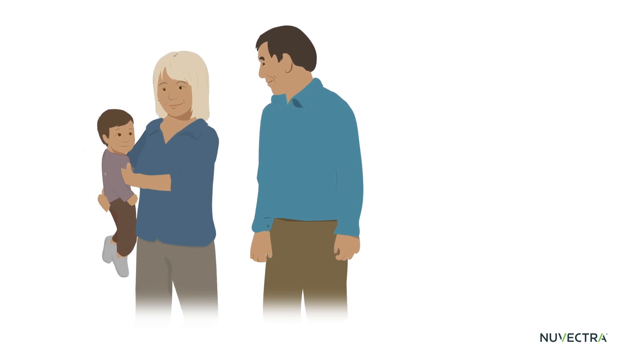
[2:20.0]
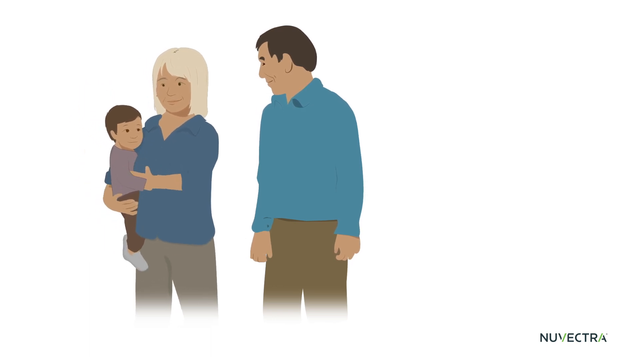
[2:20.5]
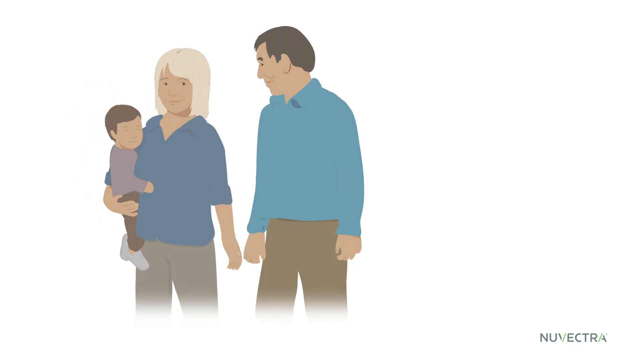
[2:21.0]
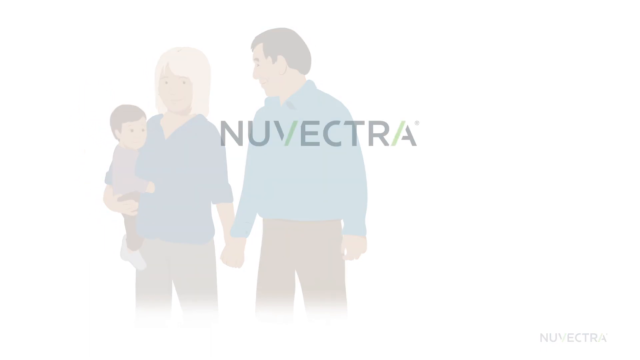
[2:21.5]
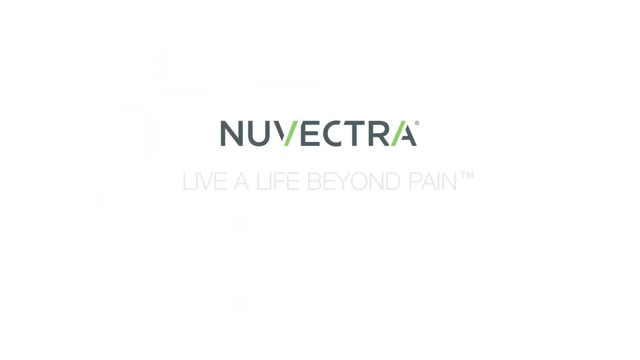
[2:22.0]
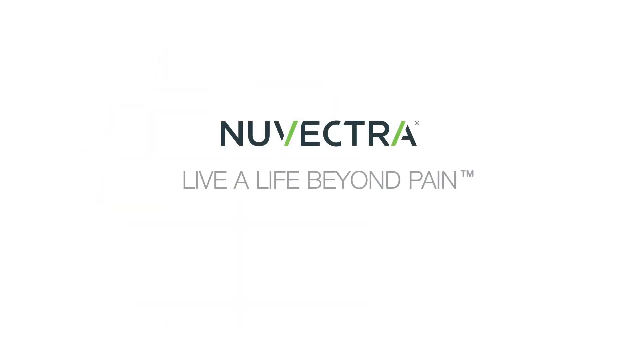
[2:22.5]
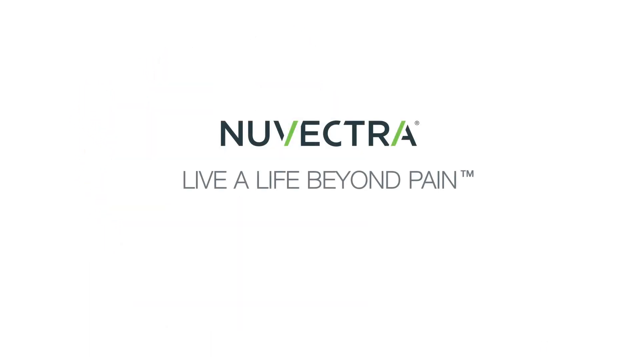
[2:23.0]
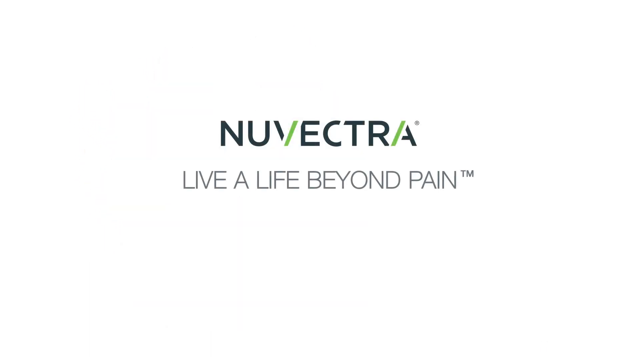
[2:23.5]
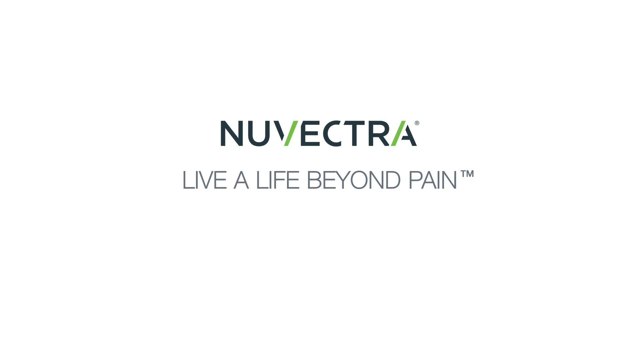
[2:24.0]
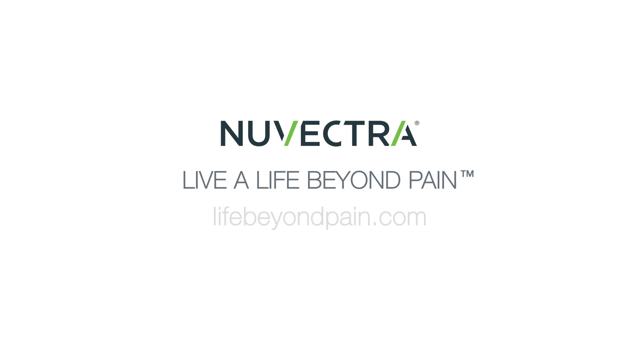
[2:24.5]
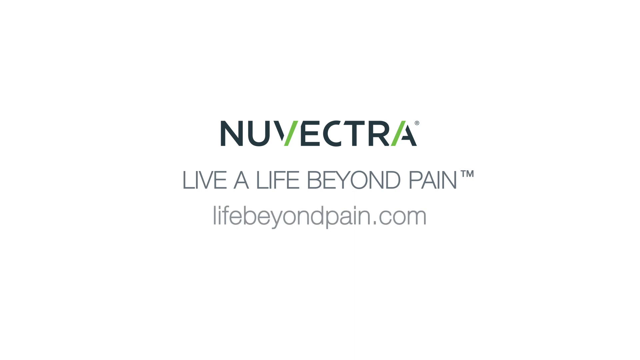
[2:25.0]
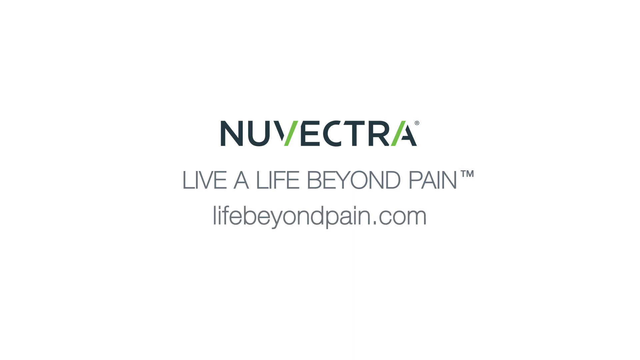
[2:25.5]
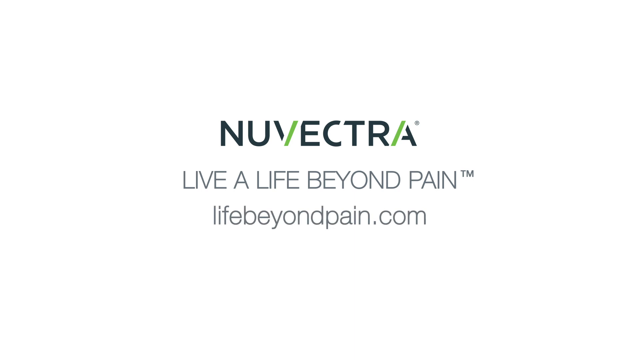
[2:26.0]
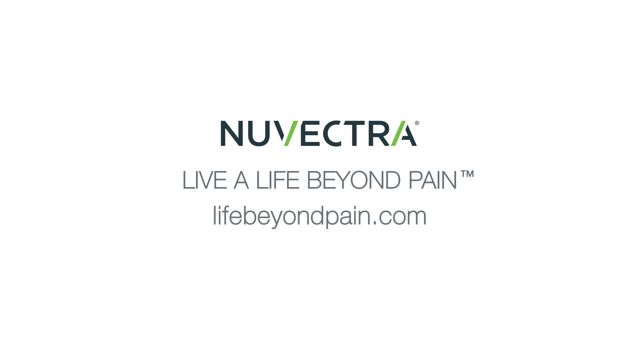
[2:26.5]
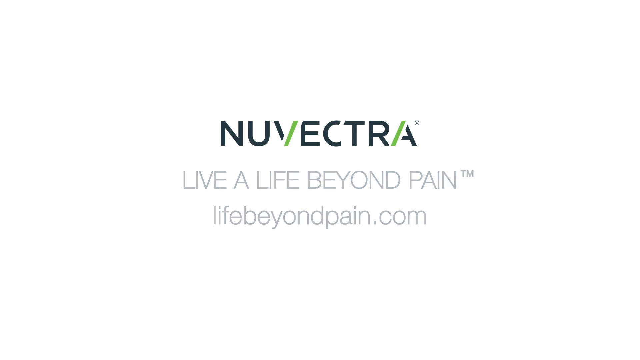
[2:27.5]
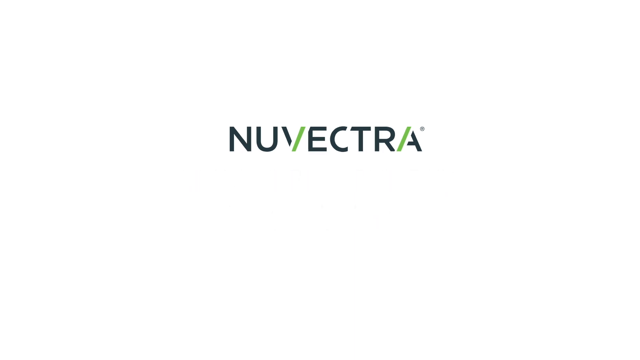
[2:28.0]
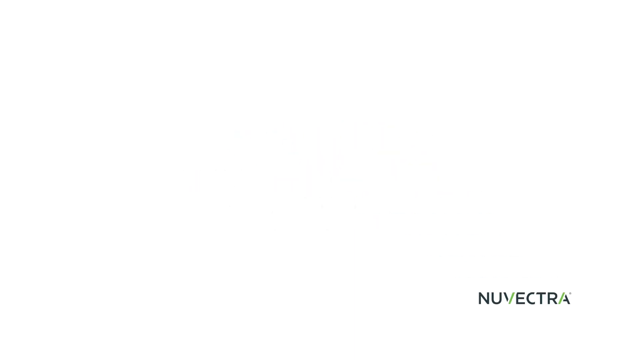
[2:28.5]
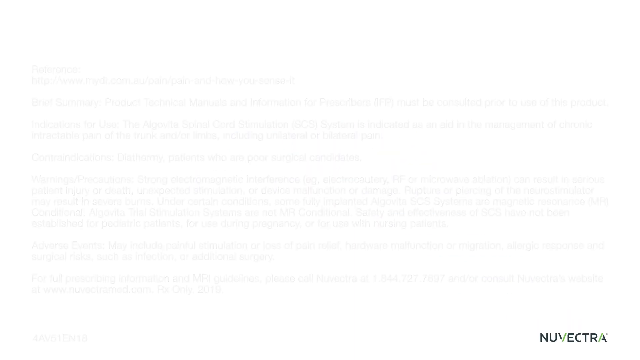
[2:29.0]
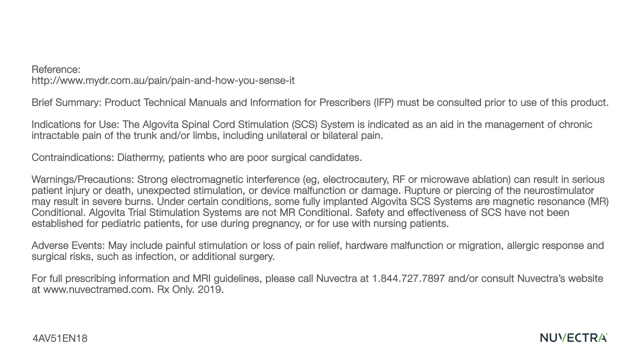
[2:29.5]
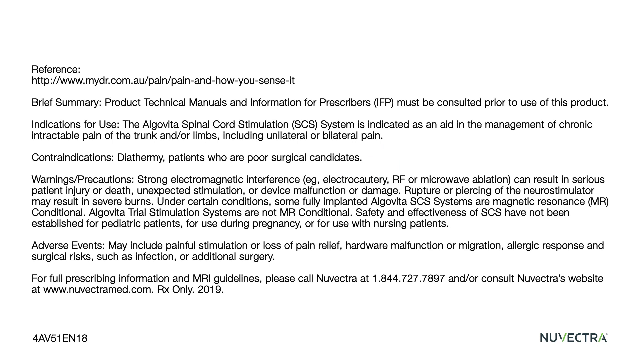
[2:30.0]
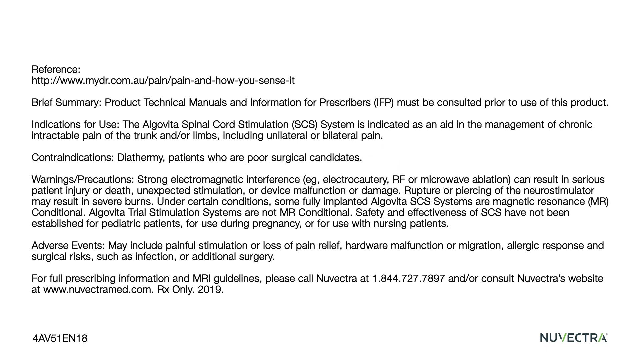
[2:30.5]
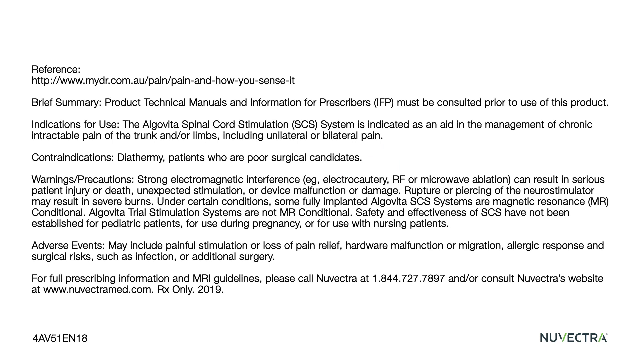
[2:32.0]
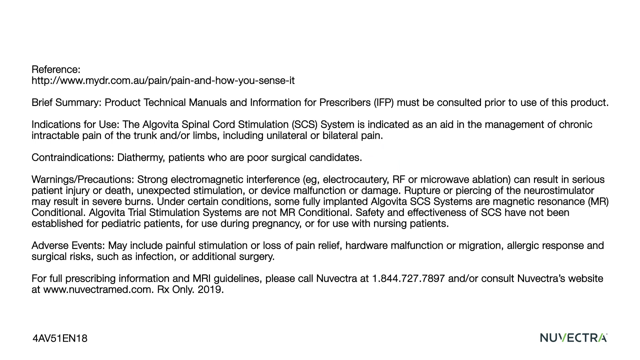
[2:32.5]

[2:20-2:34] The couple is shown, with the woman on the left holding a small child in her right arm. The couple rejoins hands, the woman's left hand connecting with the man's right hand. The brand label is then shown on the screen one more time on a white background, with "live a life beyond pain" below it and "lifebeyondpain.com" below that, as the closing screen. A series of black text then appears on the screen, including the reference area, indications for use, warnings and precautions, and other information relating to the device.